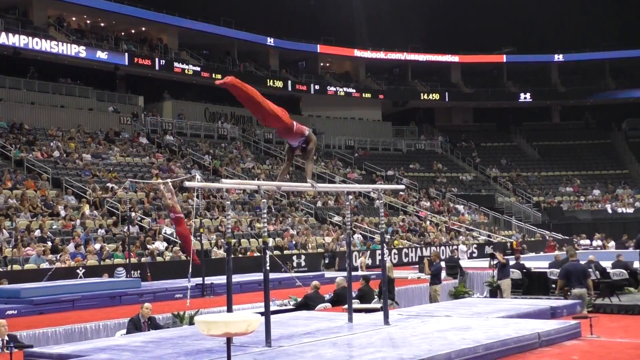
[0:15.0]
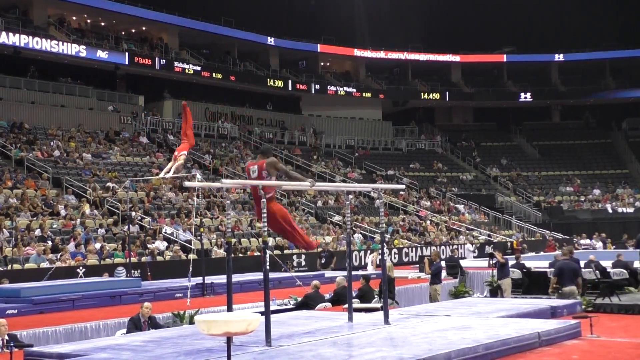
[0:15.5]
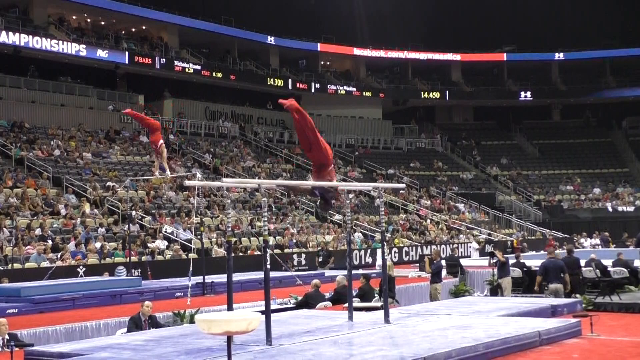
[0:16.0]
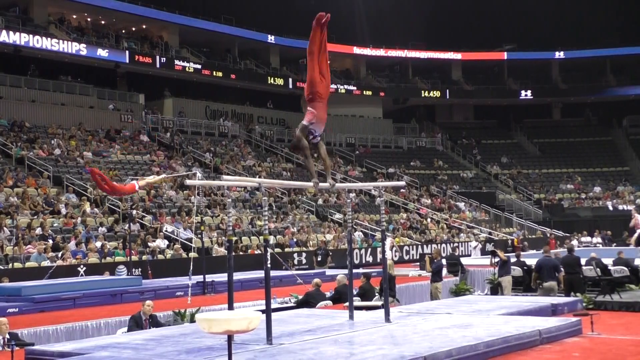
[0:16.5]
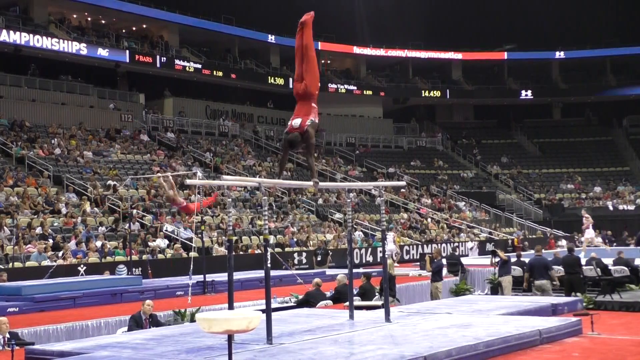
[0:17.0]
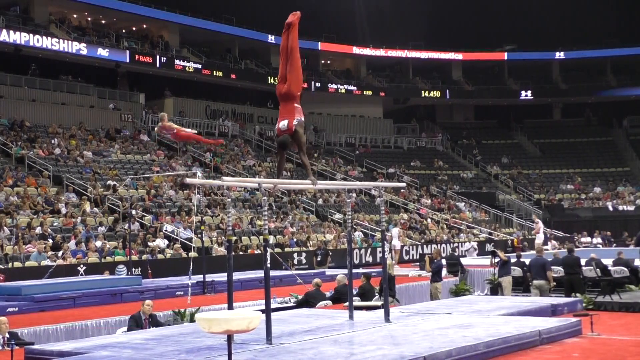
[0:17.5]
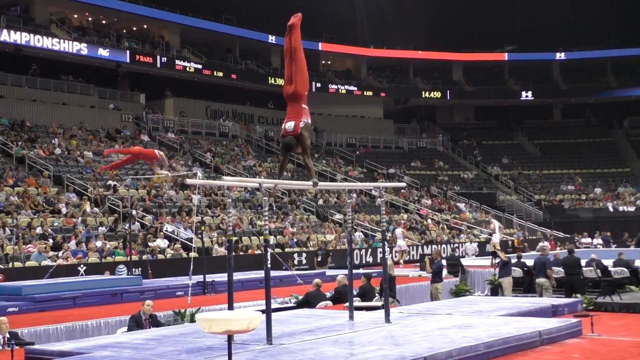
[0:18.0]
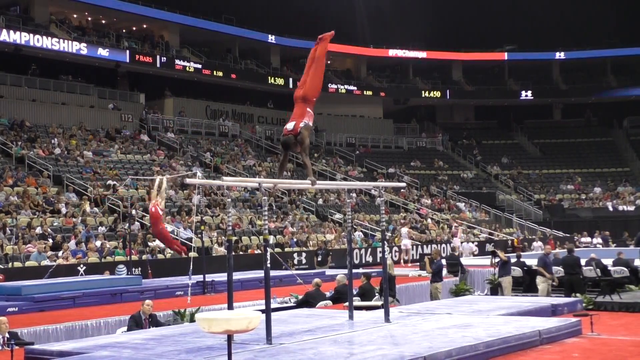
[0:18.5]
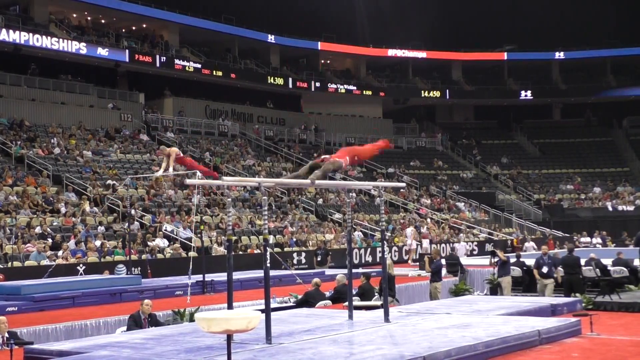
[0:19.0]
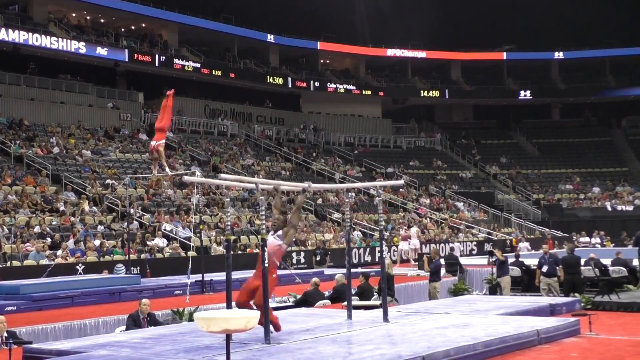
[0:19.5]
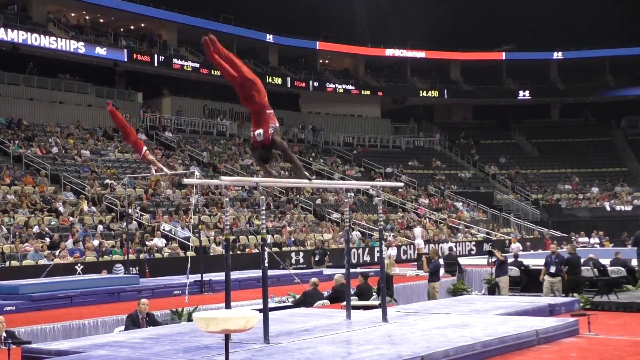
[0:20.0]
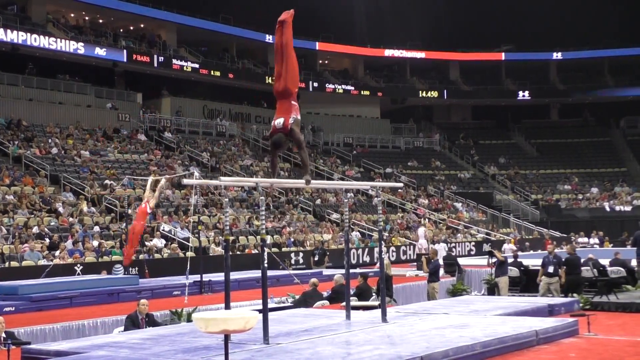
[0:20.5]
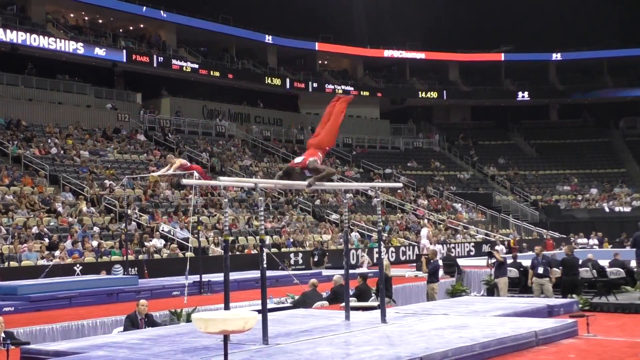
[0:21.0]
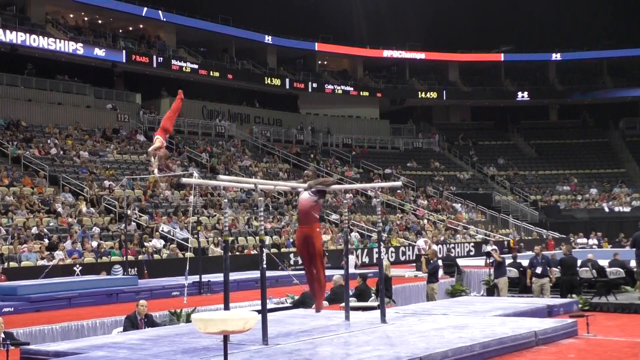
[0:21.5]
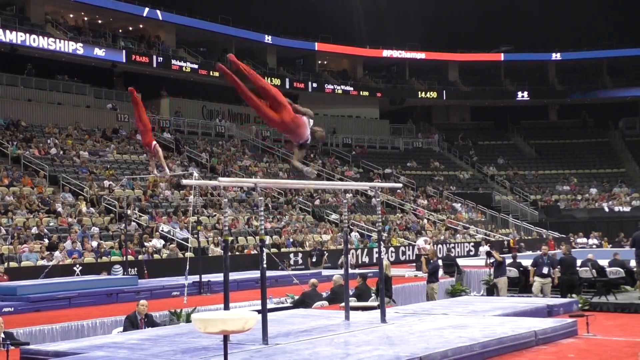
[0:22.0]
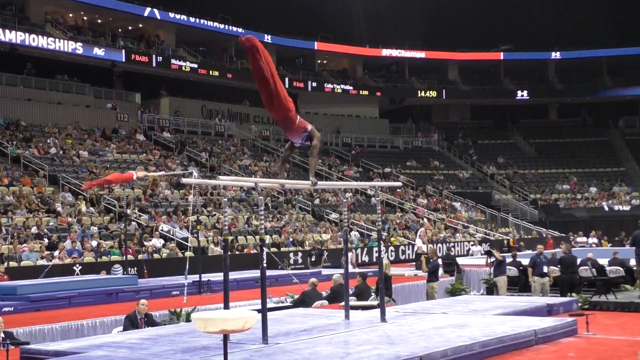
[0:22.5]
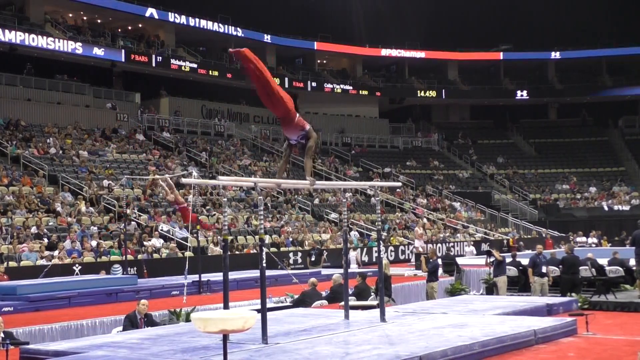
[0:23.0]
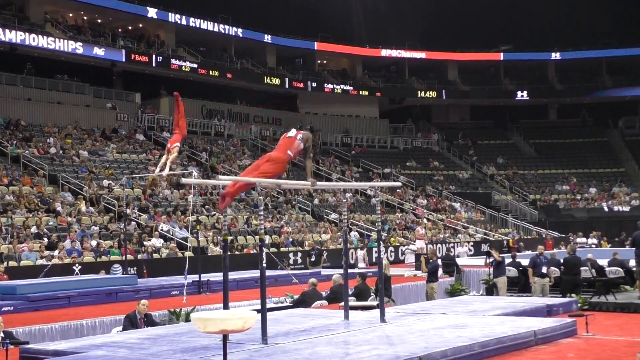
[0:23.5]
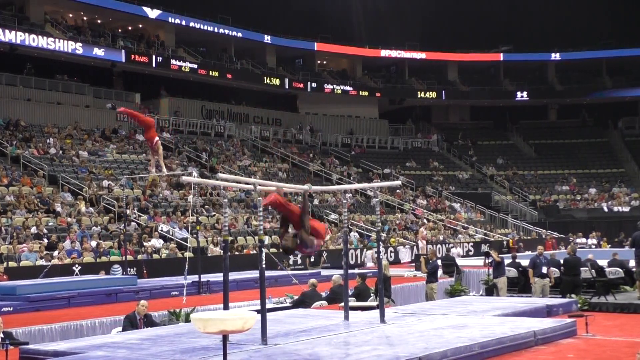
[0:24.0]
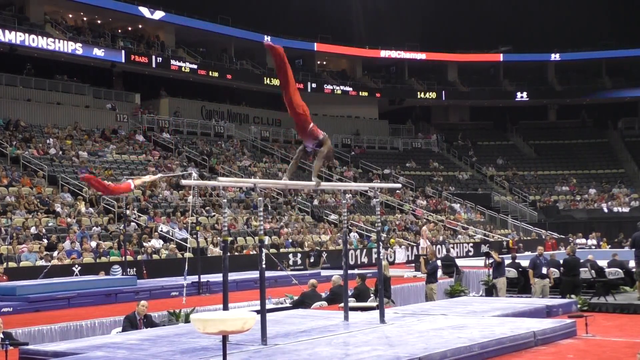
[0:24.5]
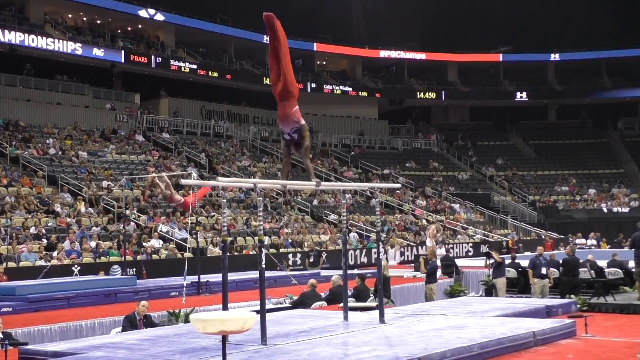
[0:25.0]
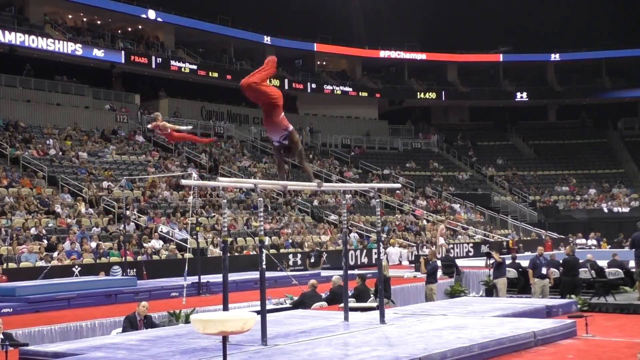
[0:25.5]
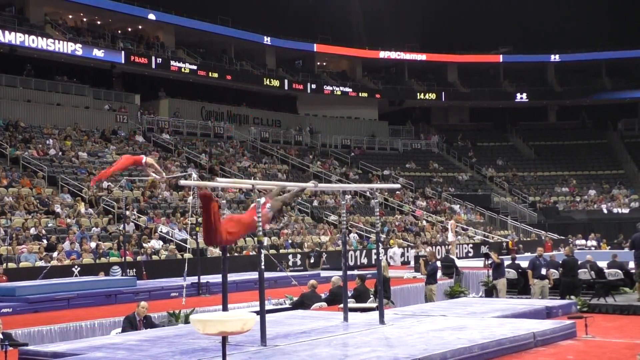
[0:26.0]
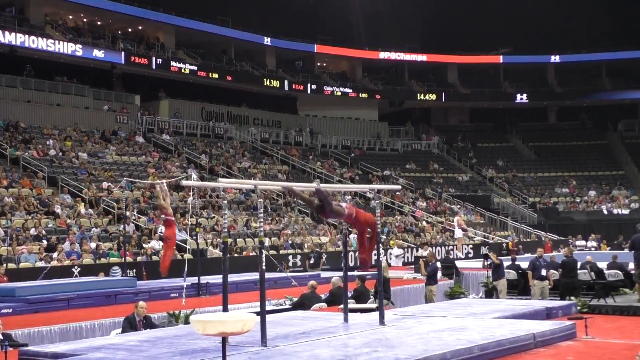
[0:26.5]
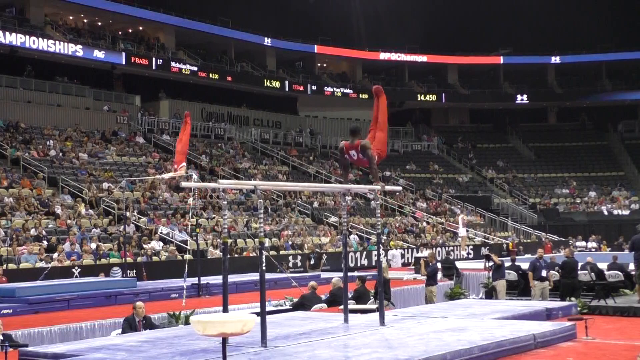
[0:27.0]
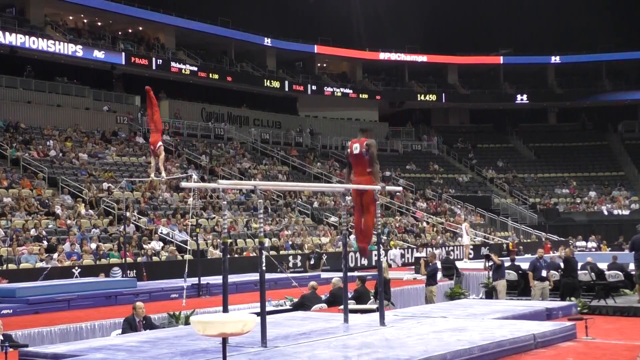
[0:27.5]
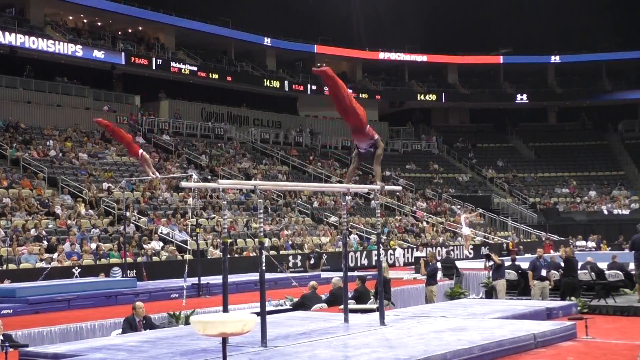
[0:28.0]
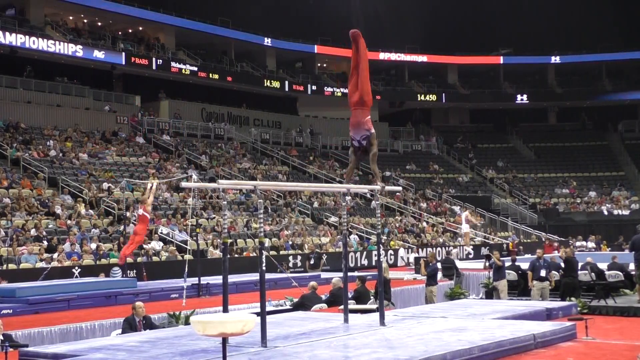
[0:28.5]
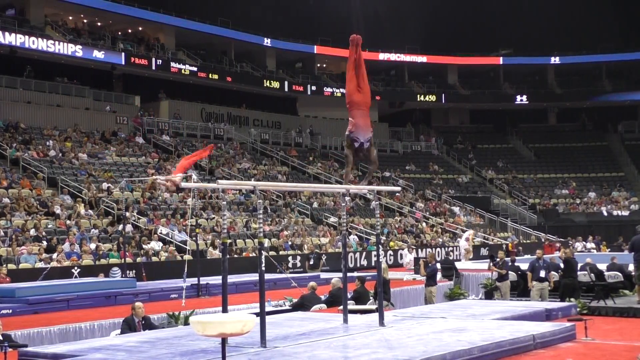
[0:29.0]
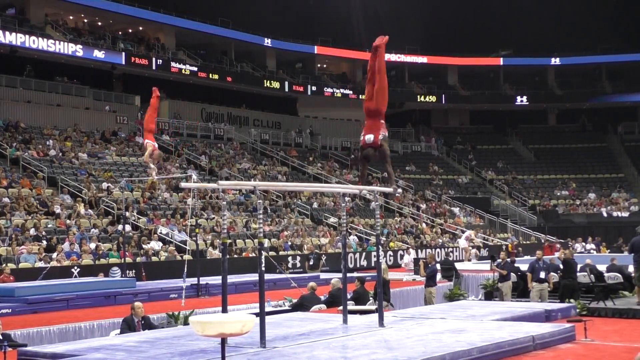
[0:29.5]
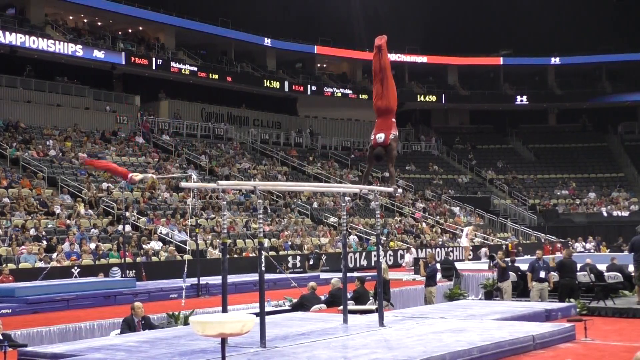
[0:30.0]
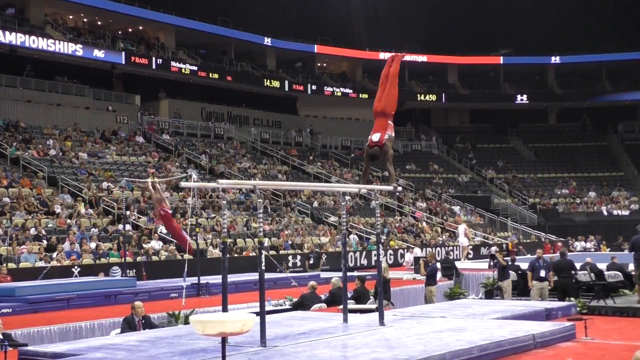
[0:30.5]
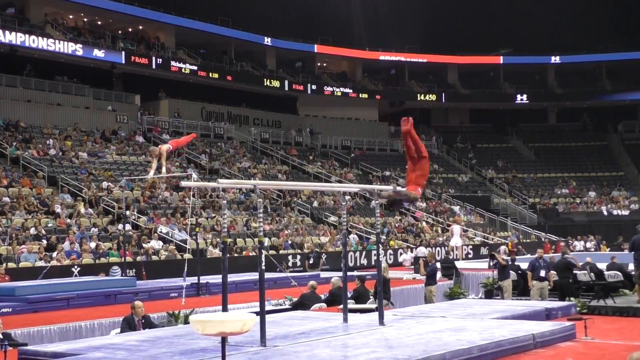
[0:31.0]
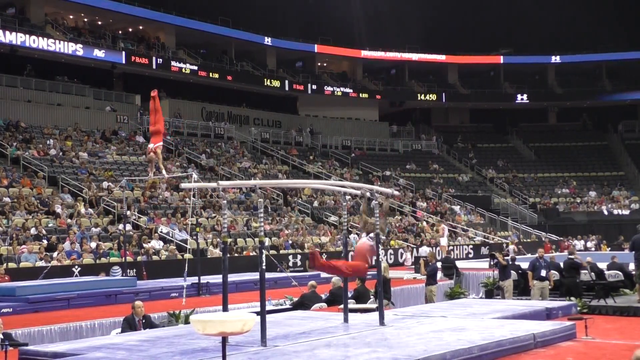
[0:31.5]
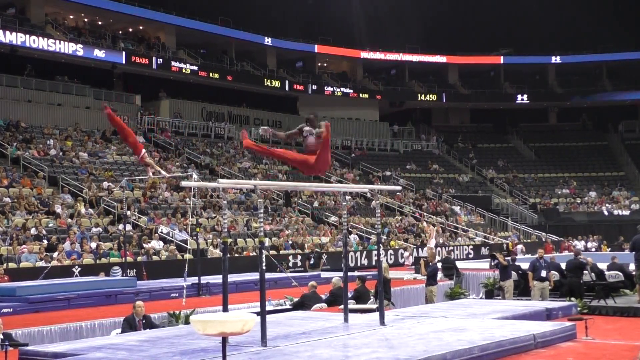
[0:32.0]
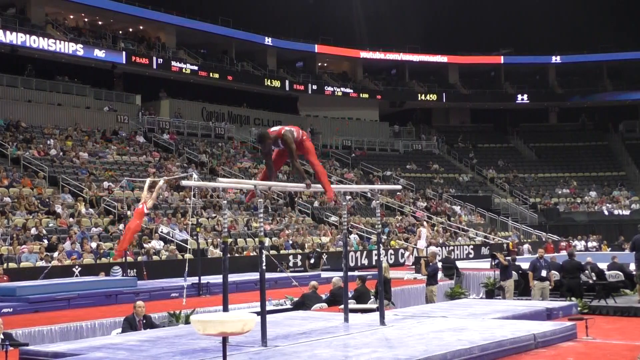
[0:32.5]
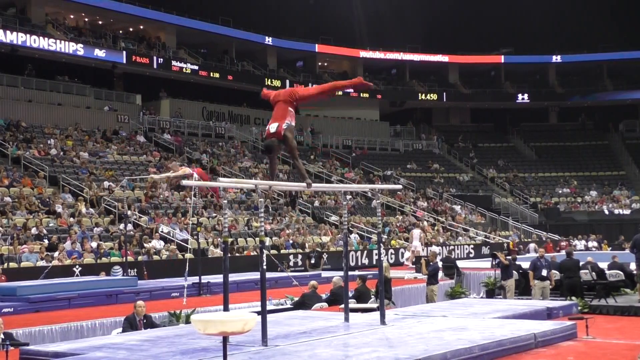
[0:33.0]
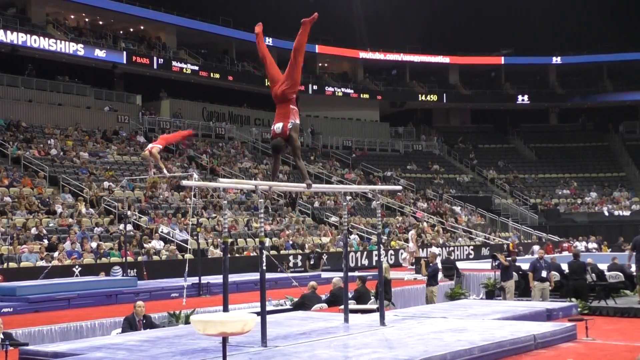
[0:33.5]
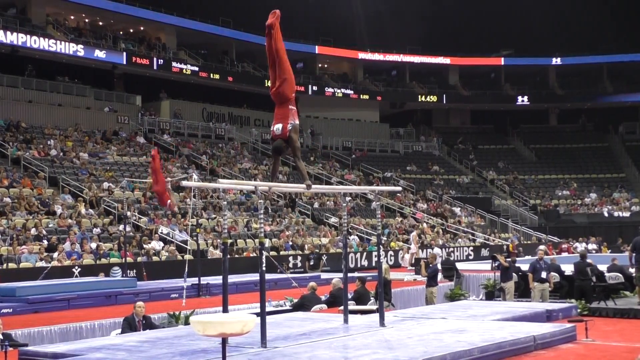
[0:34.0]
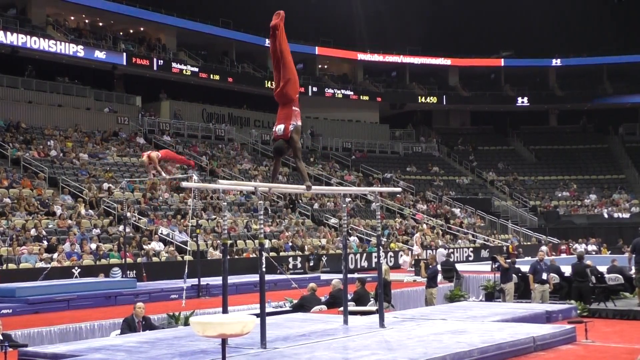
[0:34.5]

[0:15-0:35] Marvin Kimble performs his parallel bars routine at the 2014 PNG Championships, the U.S. National Championships for Gymnastics. He mounts the bar and does a couple of flips, moving back and forth on the bars, switching from one hand to the other, and changing his position from facing forward to facing back. He does handstands on the parallel bars, swings back and forth, and does flips to change his orientation from back to front, all while keeping contact with the bar. In one flip he swings and lets go of the bar, then catches himself.